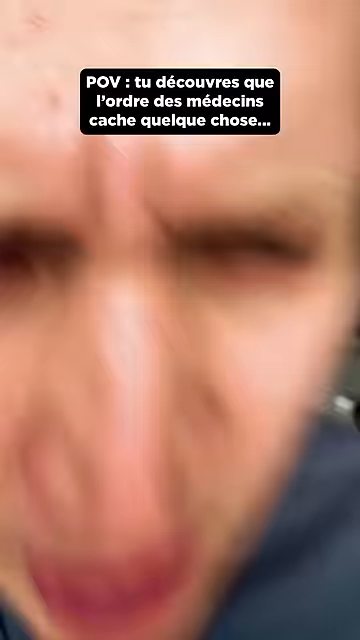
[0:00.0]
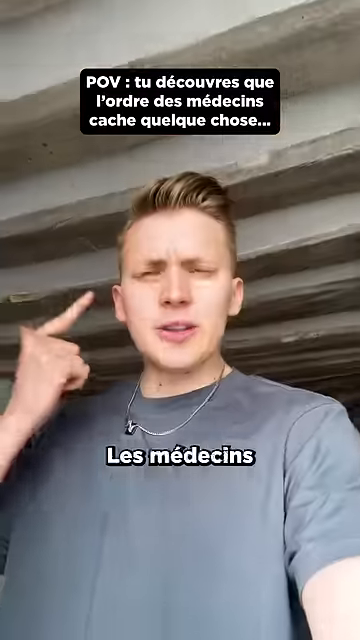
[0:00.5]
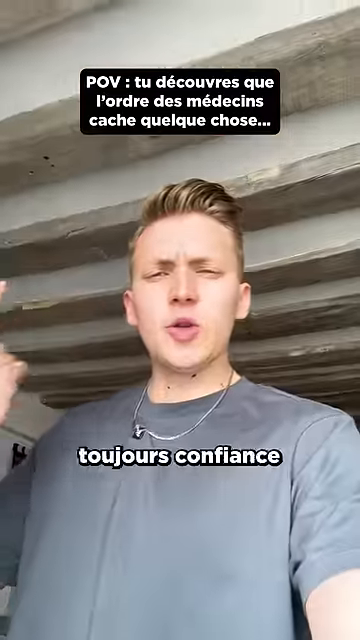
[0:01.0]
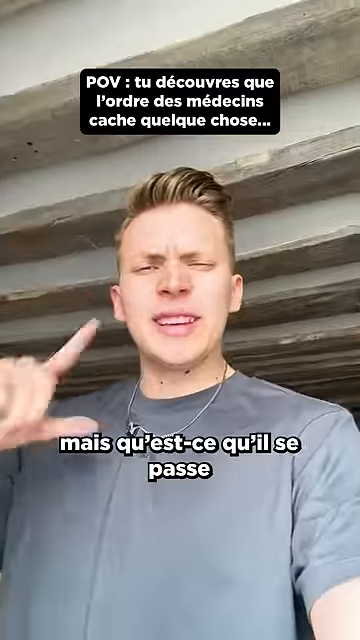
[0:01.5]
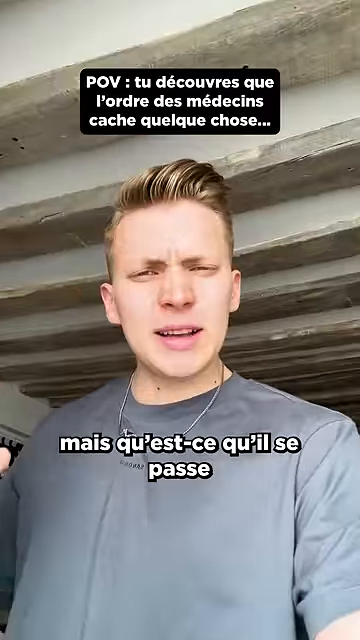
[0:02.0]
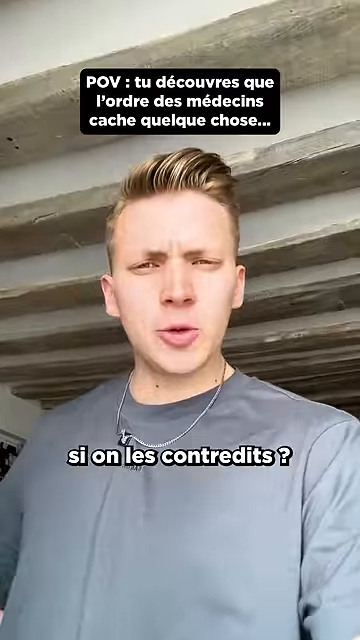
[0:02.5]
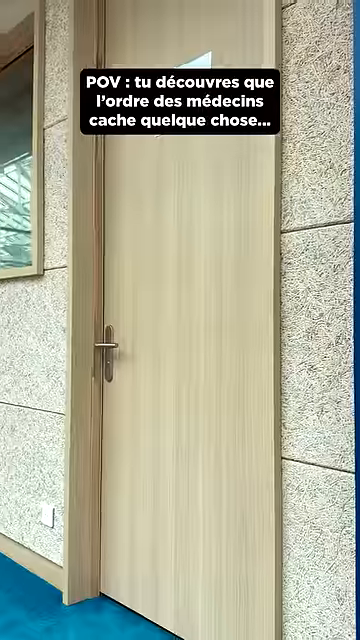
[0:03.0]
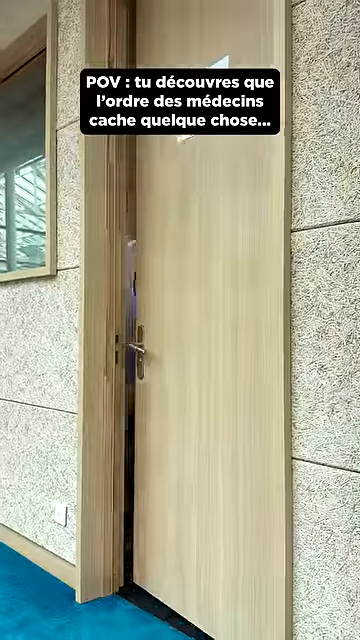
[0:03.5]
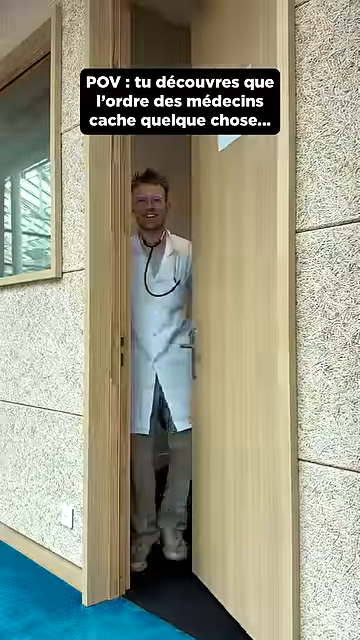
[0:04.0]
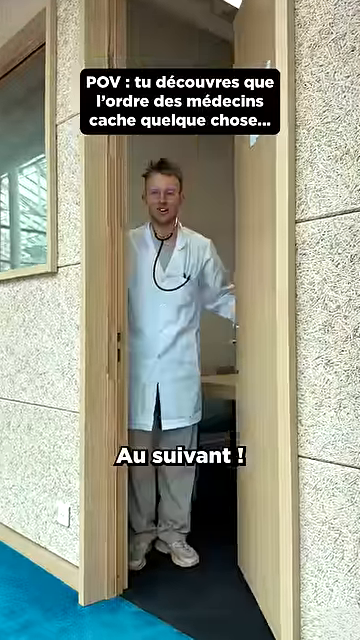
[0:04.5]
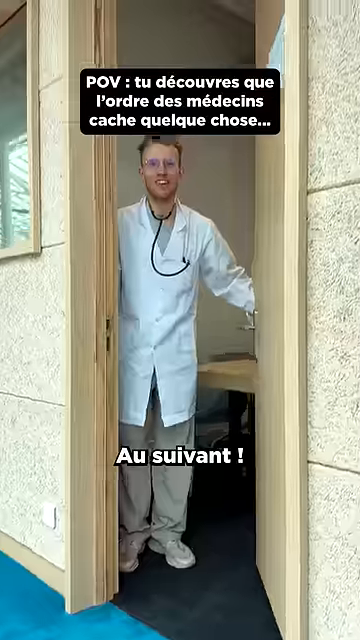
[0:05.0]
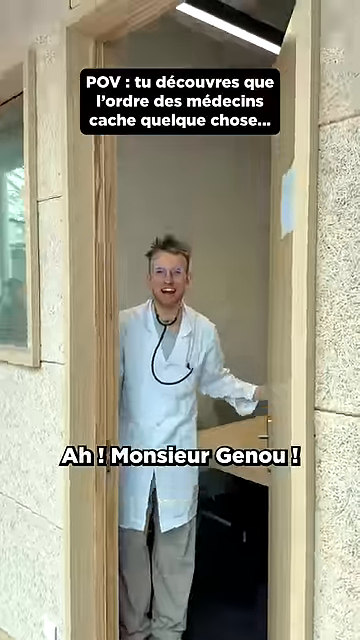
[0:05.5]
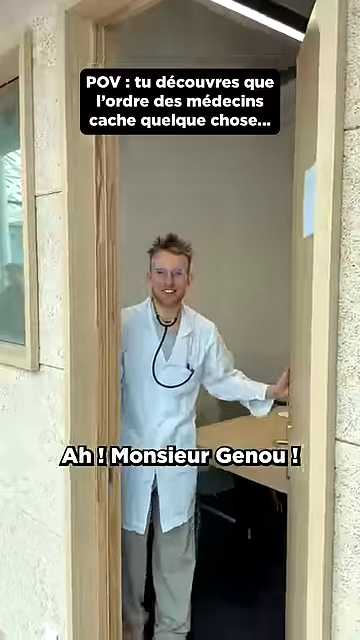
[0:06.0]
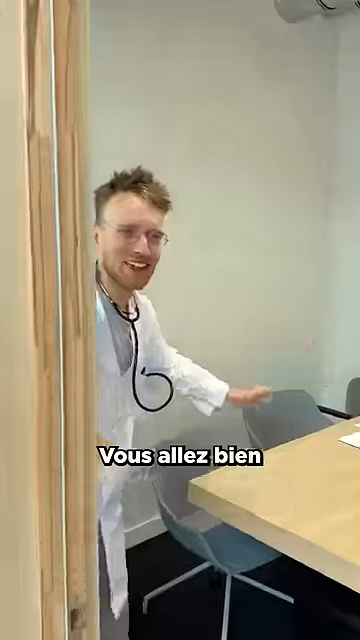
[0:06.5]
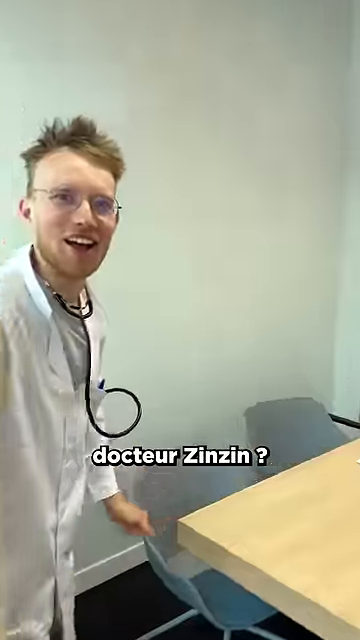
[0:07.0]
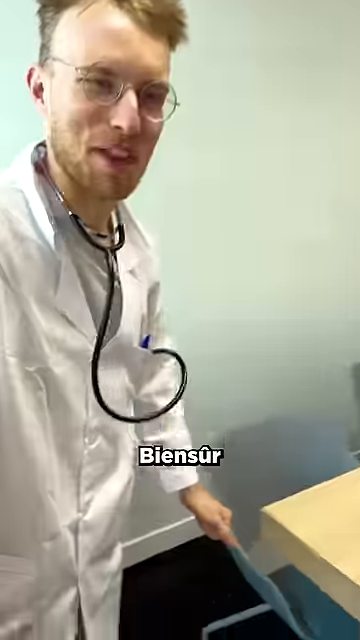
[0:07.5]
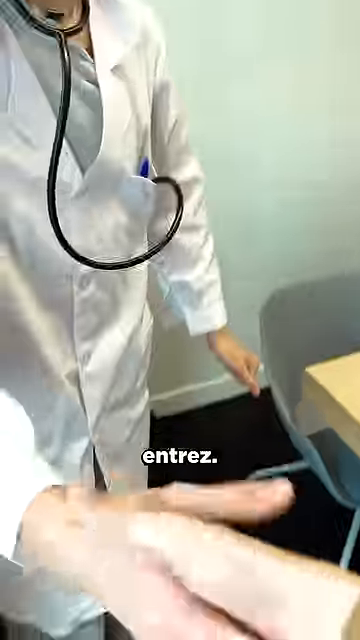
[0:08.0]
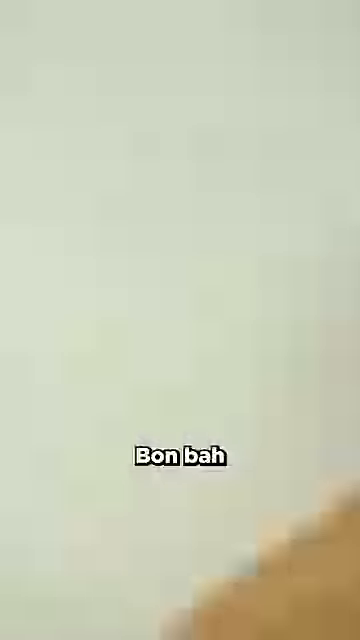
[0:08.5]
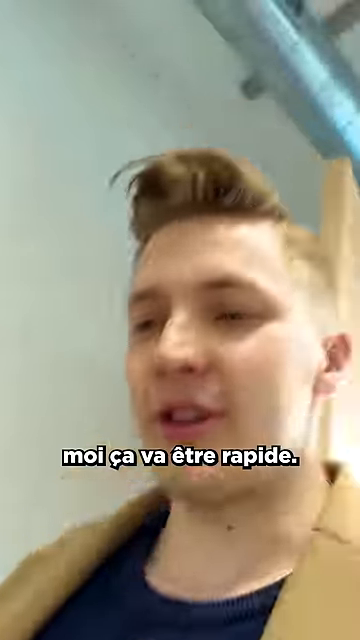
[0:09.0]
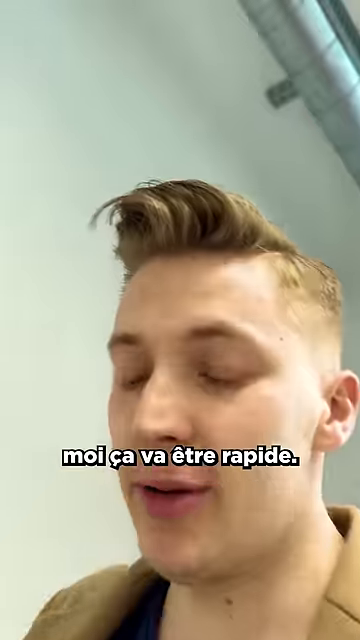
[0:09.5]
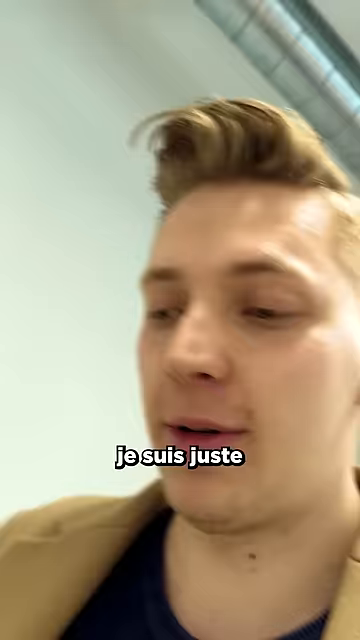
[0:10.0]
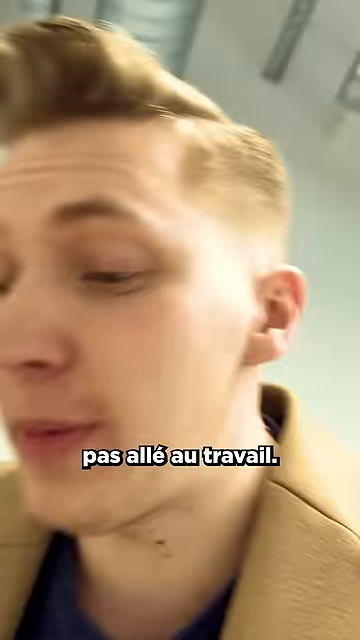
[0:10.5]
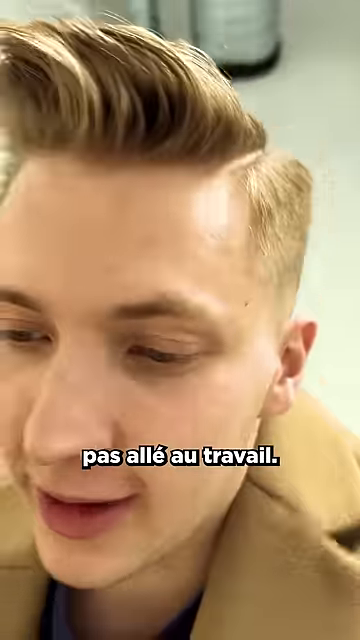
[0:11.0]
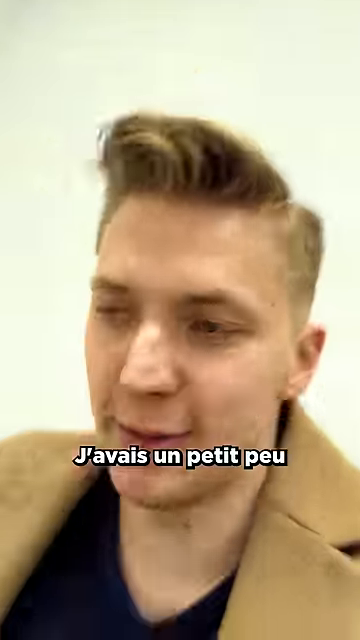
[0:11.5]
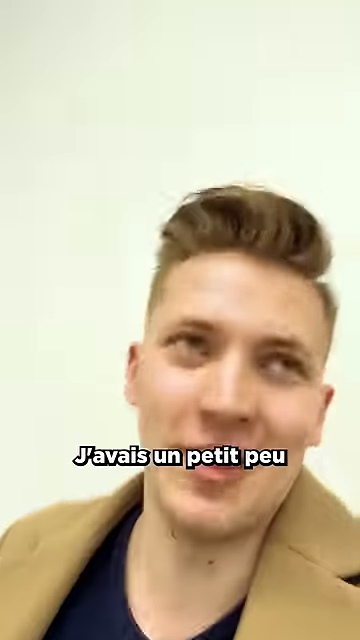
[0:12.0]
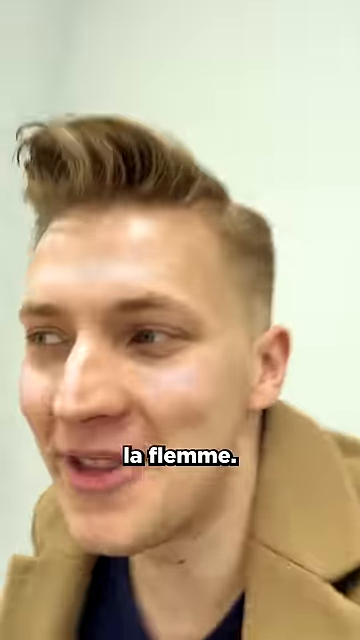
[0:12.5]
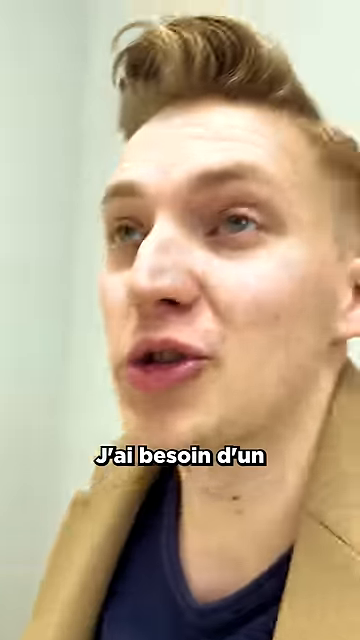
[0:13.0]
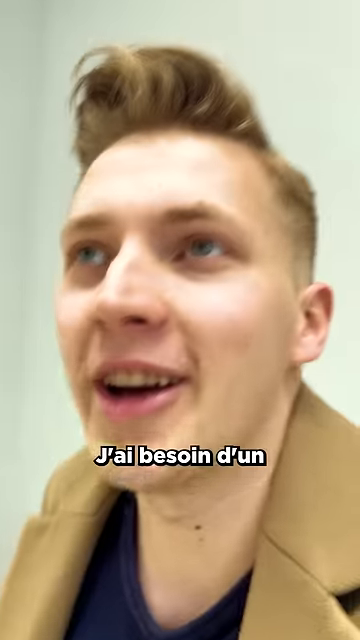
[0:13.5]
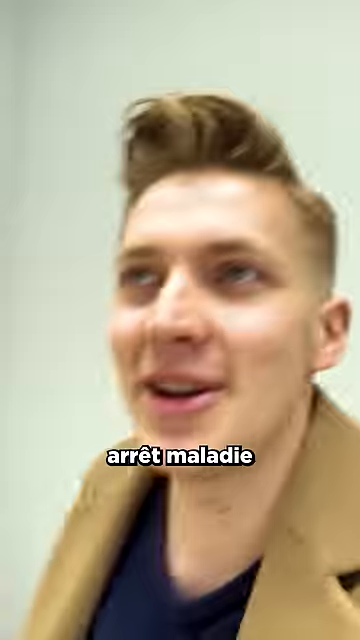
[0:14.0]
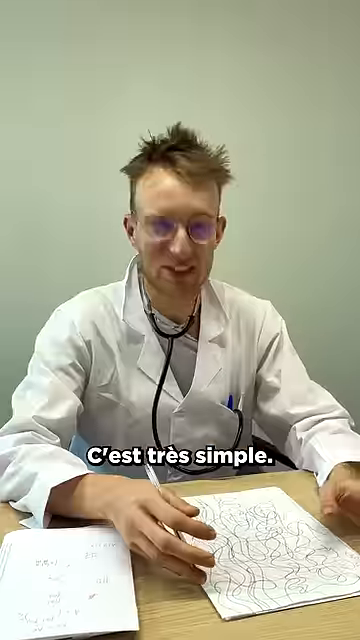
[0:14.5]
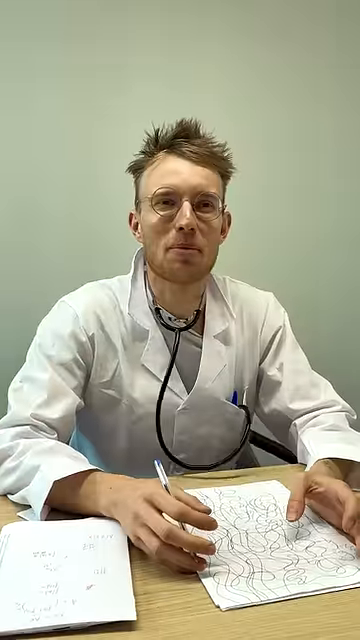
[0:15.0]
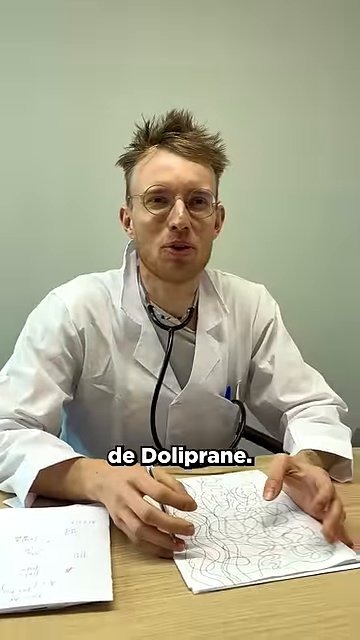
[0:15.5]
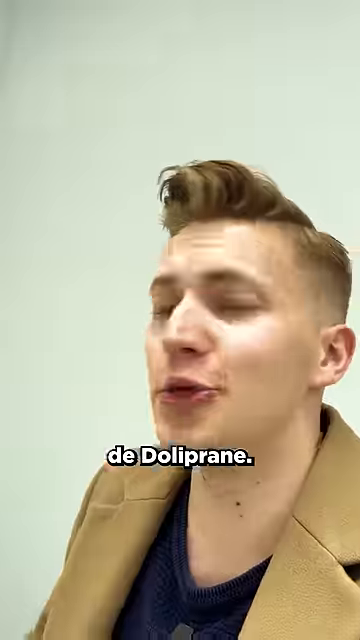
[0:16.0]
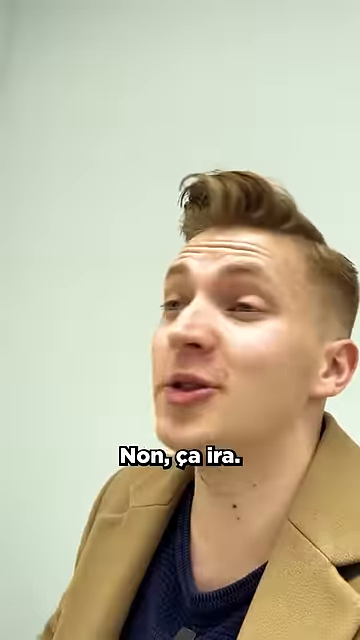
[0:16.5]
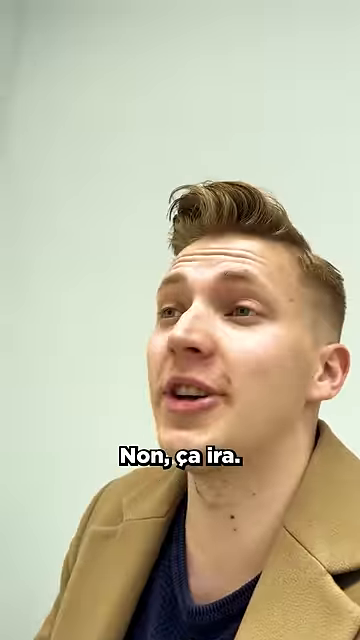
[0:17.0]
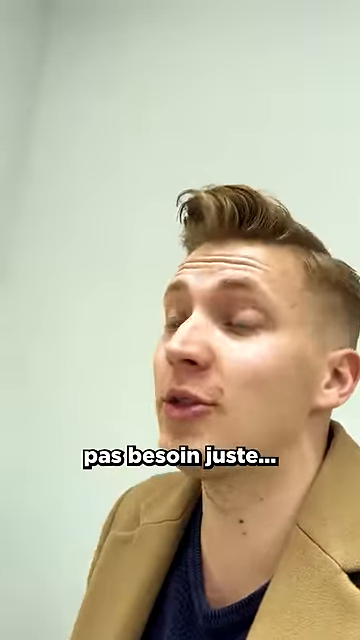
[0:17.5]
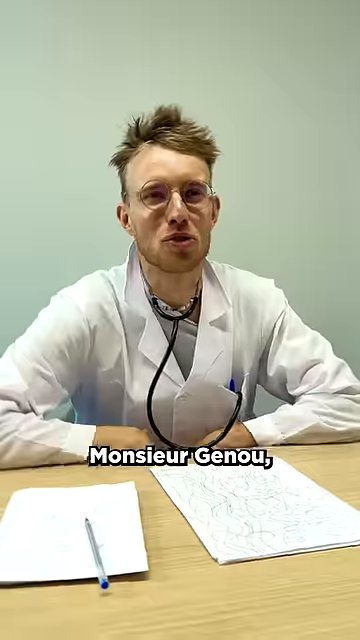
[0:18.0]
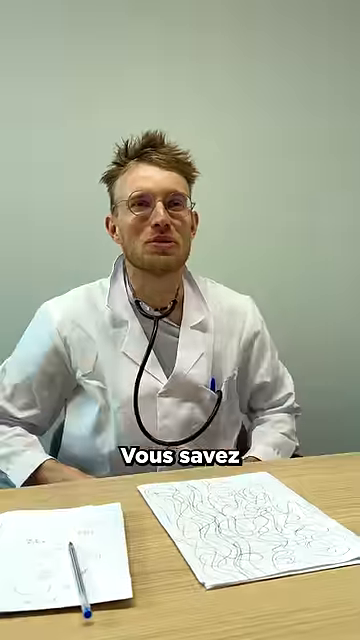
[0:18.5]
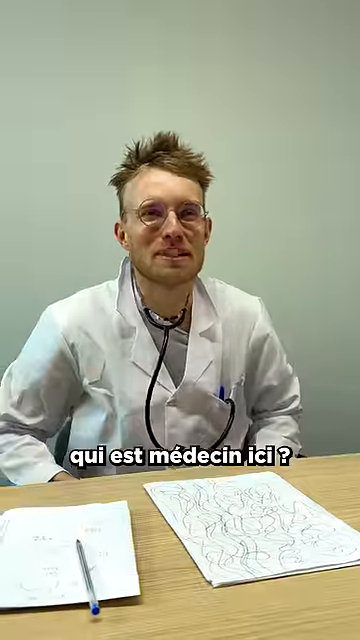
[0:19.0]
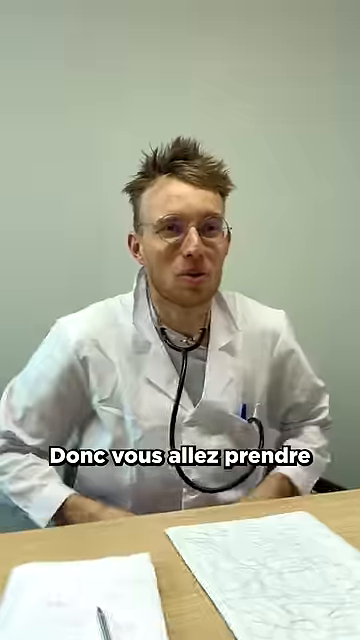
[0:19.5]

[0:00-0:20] A white man with flipped-up blonde hair and a shirt points to his head while speaking to the camera. He is then dressed like a doctor and wears what looks like a beige mohair jacket; he may be playing both parts, the doctor and the other man. The setting moves from outside, through the door of a really sketchy doctor's office, and then inside the office. The two sit on either side of a desk and talk. The doctor looks about 18 years old, and the other man has a weird haircut. They are possibly French.